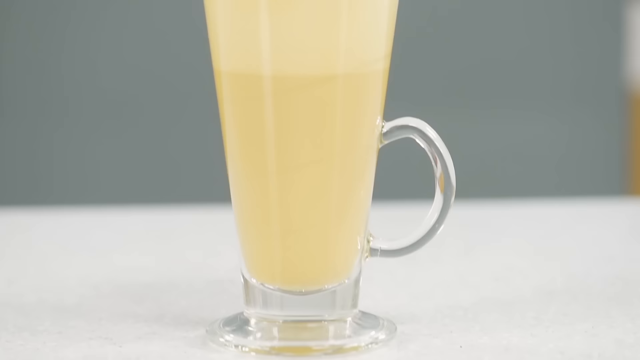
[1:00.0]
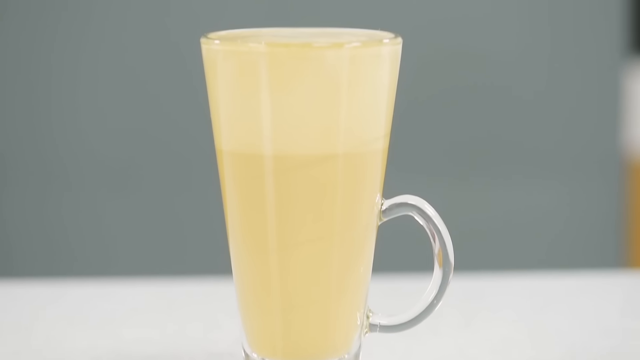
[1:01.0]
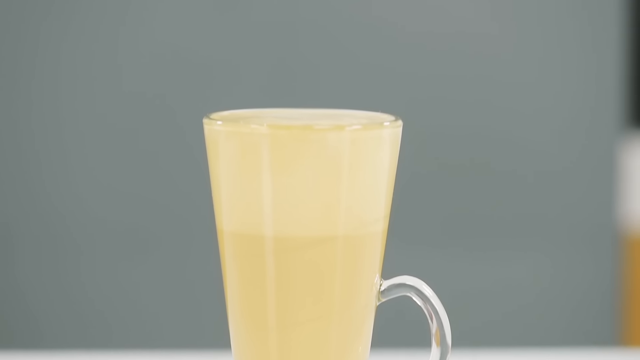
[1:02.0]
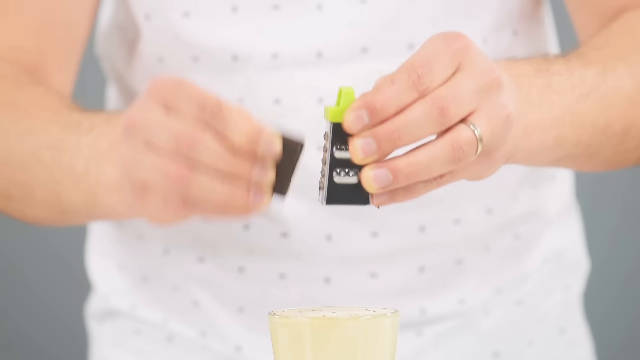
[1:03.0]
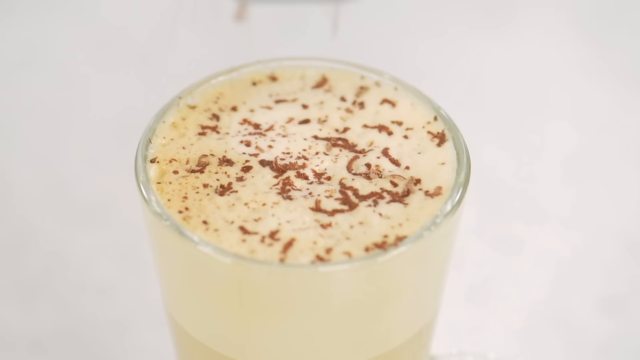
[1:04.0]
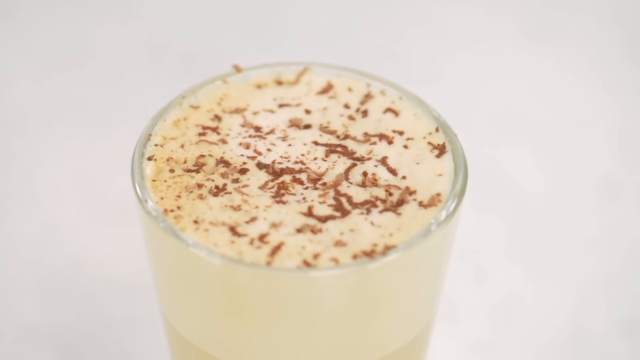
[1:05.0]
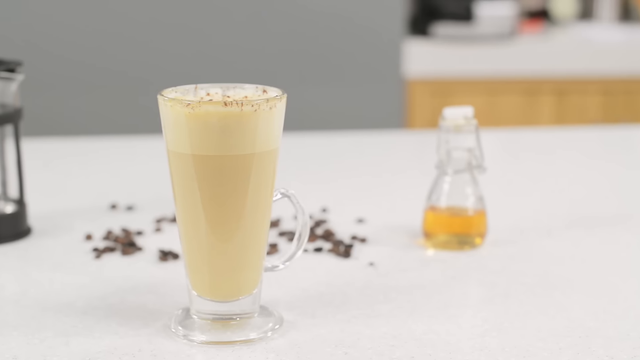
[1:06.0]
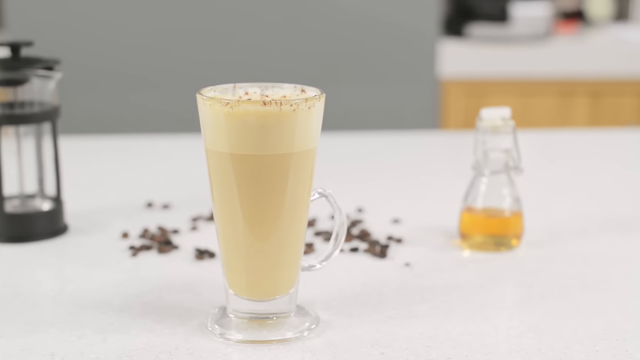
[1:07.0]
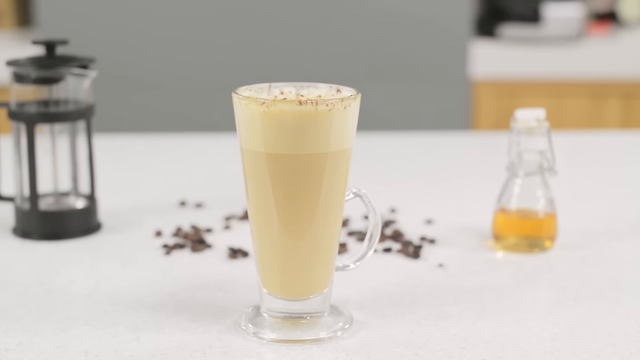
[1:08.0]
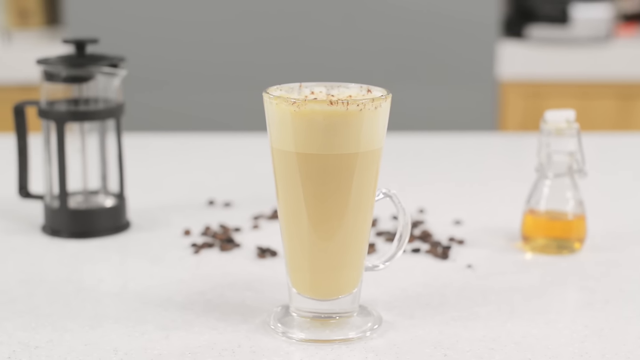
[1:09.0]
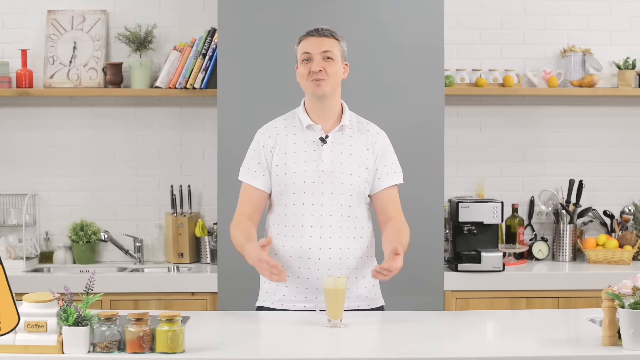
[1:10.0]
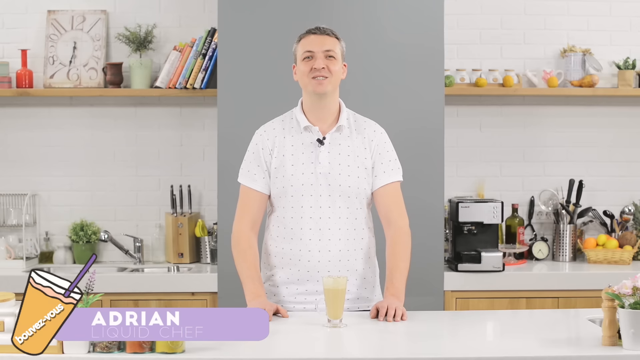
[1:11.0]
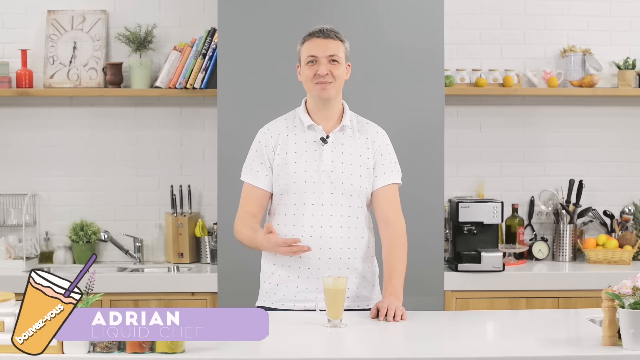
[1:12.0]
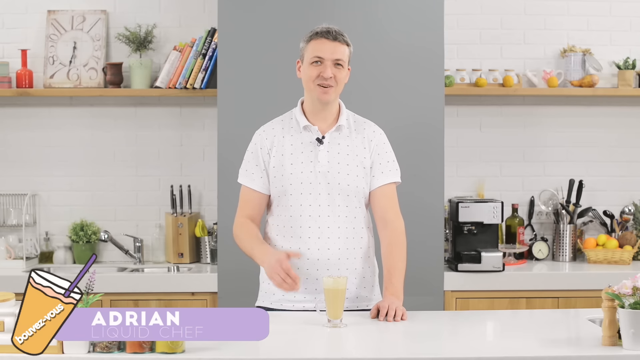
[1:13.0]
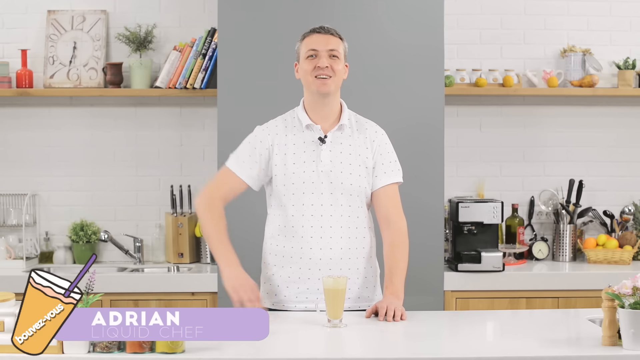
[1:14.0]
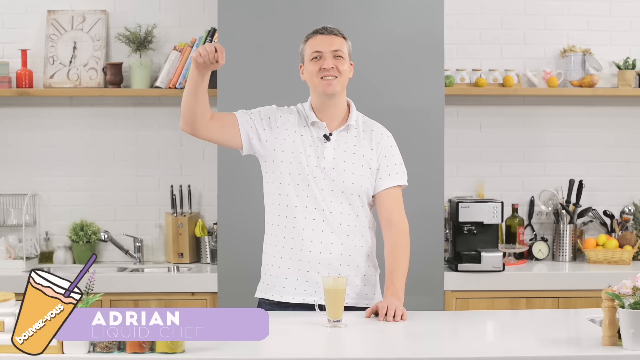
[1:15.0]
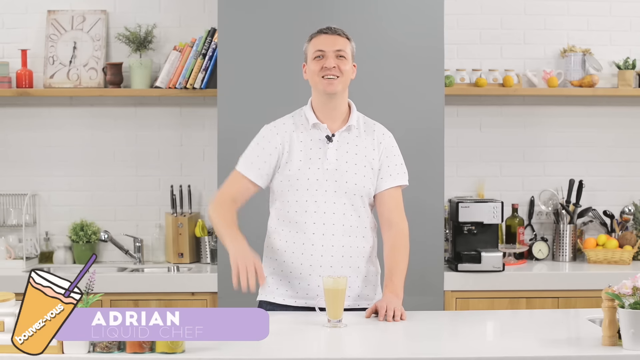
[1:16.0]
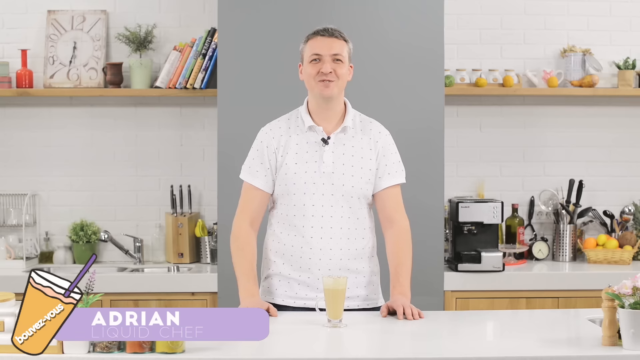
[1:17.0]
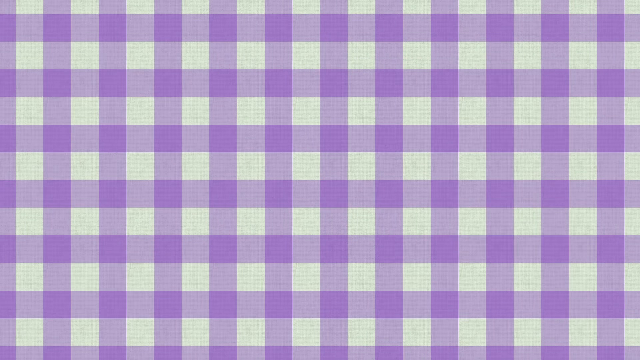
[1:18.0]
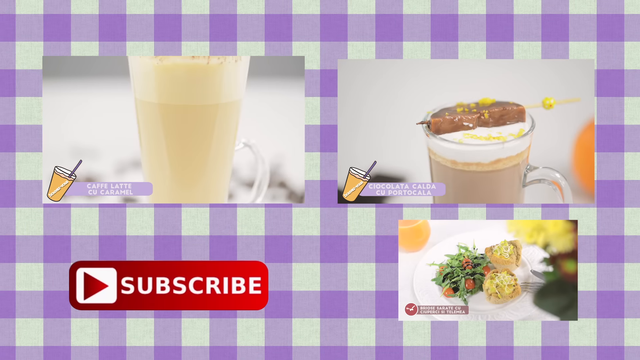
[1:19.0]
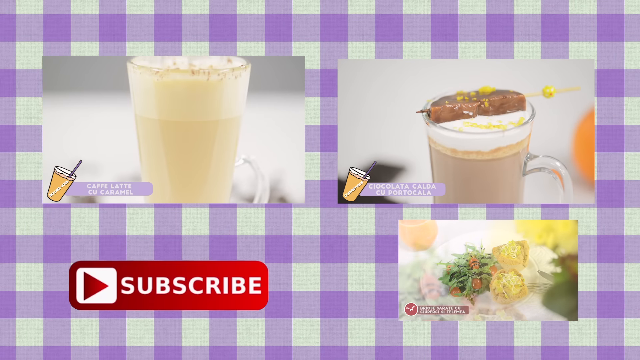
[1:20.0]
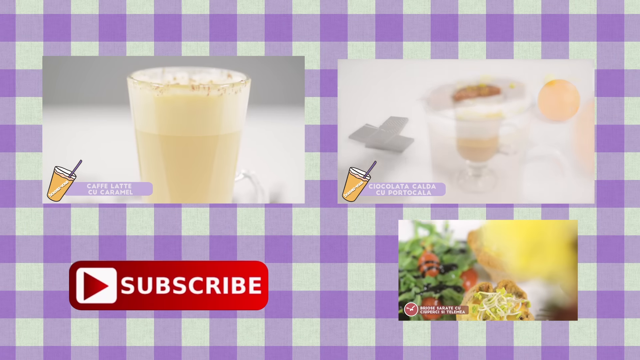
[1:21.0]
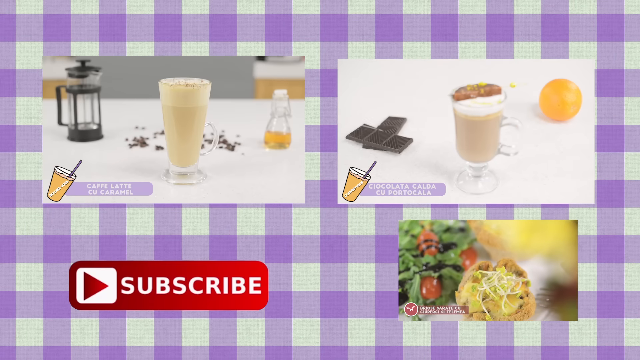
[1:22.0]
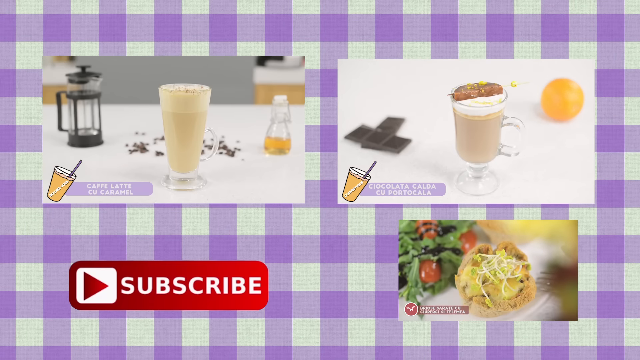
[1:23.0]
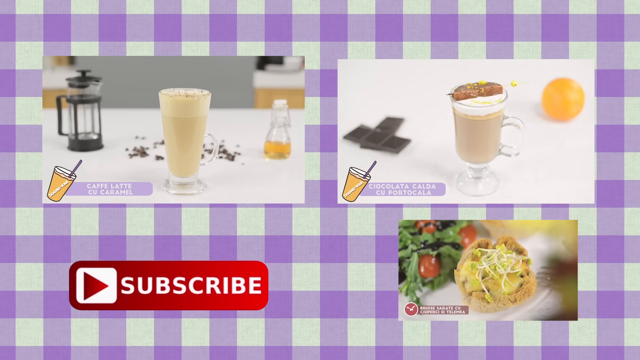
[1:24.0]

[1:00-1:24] The final steps of preparing a latte are shown. The camera pans up from the bottom of a latte cup filled with a tan drink. Someone's hands hold a very tiny grater, and the right hand holds a small piece of chocolate being grated; little flakes of chocolate fall onto the surface of the liquid at the top of the cup. The cup then rests on a counter, with what look like pieces of chocolate on the counter behind it, a small bottle with an amber liquid on the right, and a latte frothing pitcher on the left. The scene changes to a man identified as Adrian standing behind a counter with the latte cup resting on it. He speaks to the camera for a few moments and then points down to the bottom of the screen. The screen is then covered in what looks like lavender and white gingham, with three small inset videos showing different drinks being prepared and a subscribe button in the lower left corner.